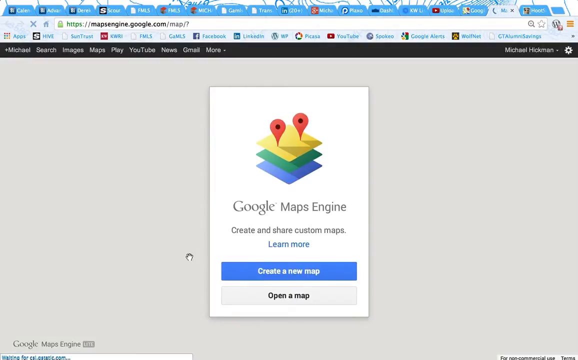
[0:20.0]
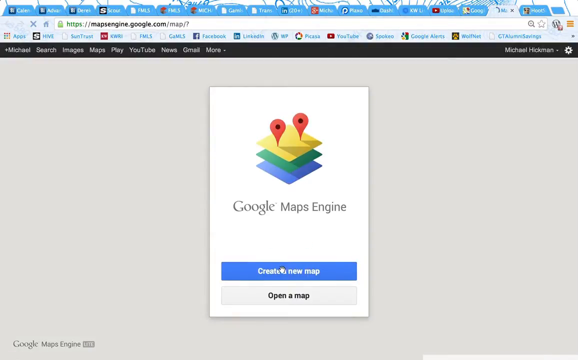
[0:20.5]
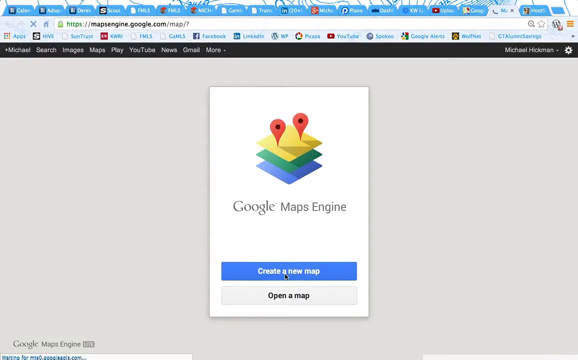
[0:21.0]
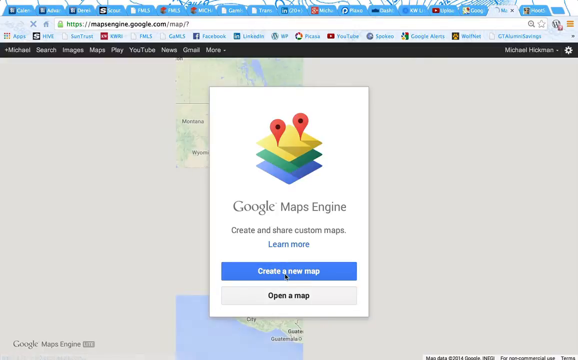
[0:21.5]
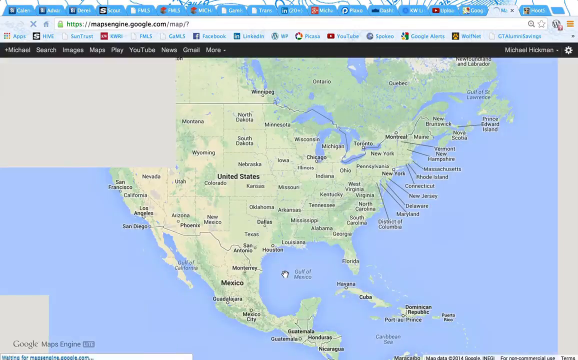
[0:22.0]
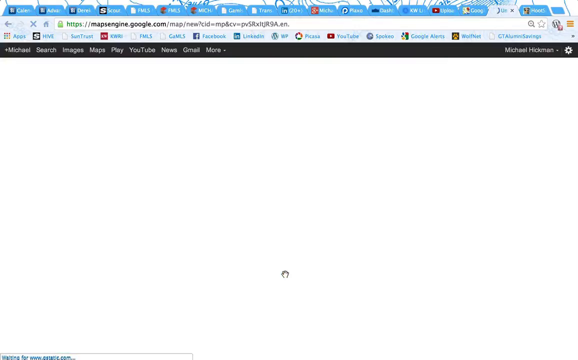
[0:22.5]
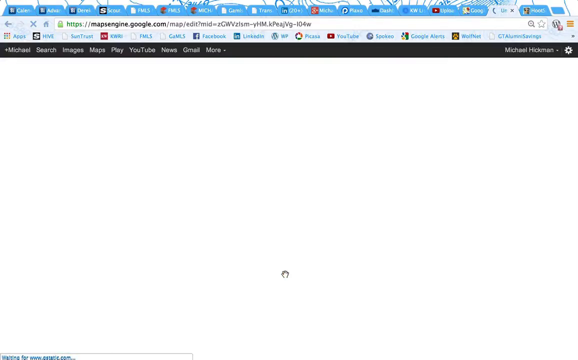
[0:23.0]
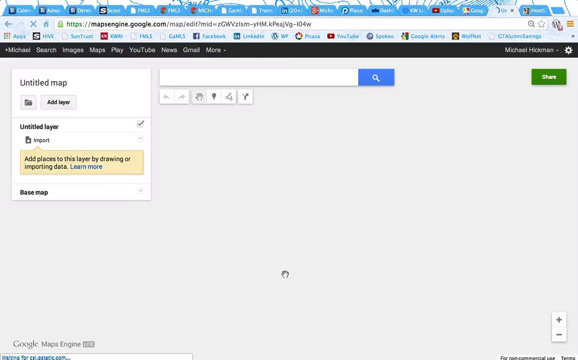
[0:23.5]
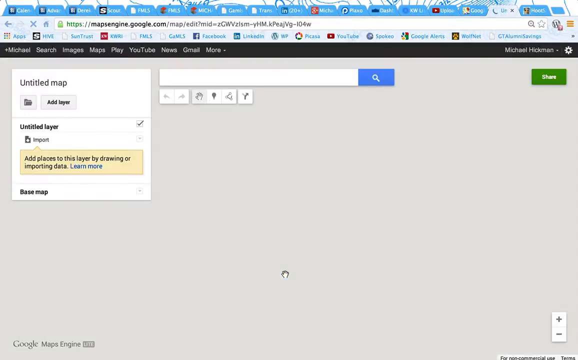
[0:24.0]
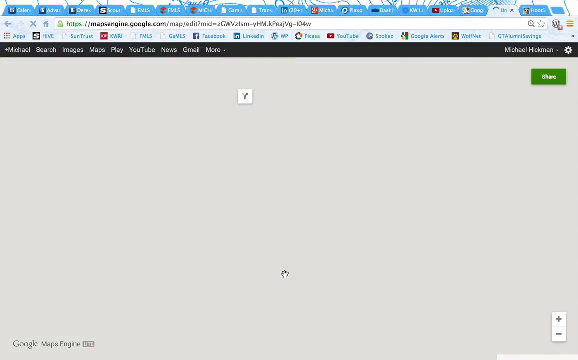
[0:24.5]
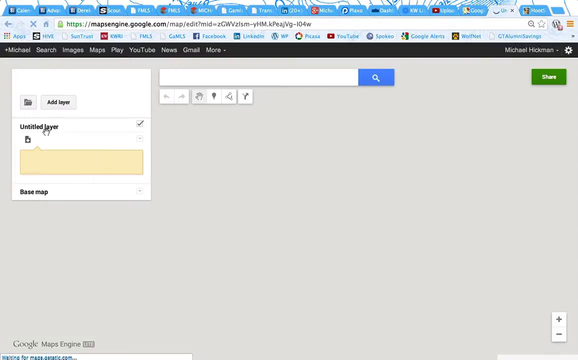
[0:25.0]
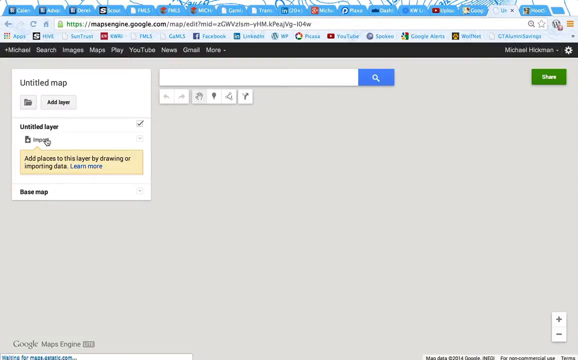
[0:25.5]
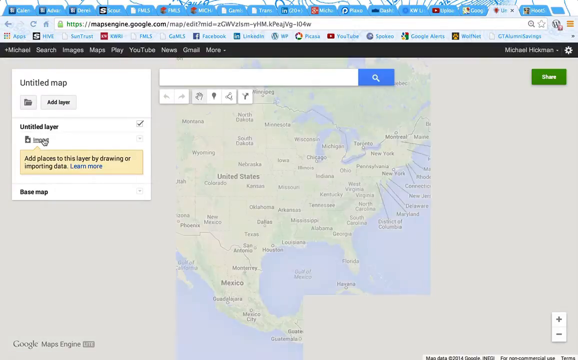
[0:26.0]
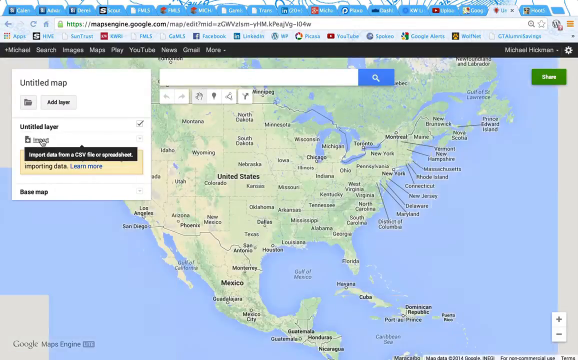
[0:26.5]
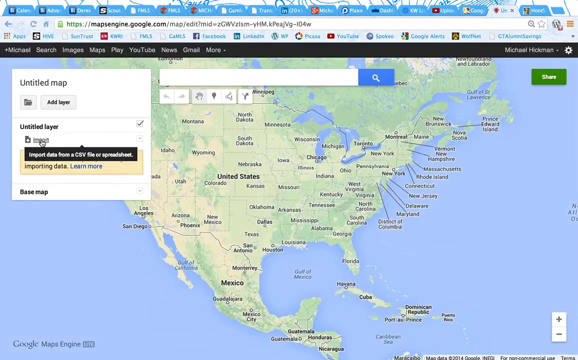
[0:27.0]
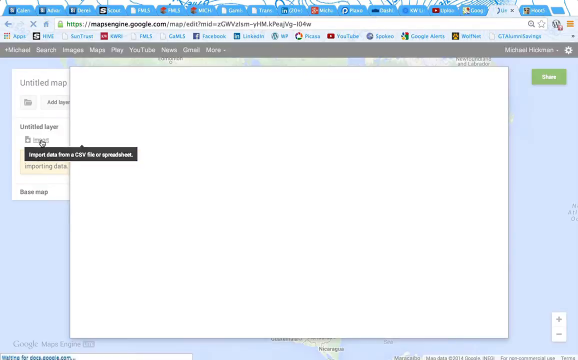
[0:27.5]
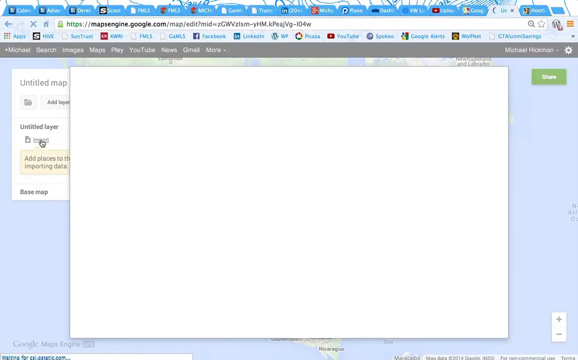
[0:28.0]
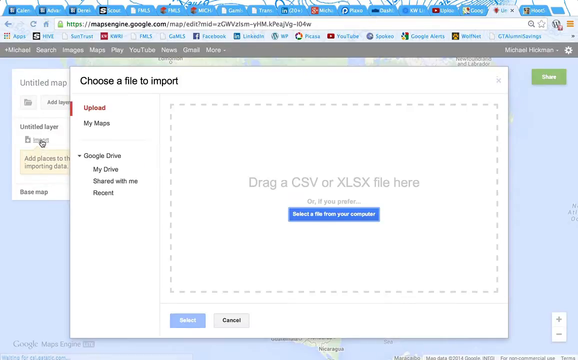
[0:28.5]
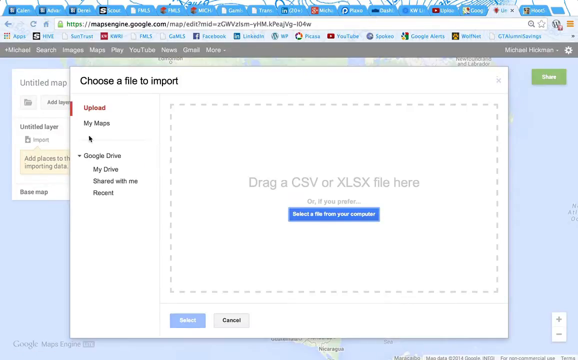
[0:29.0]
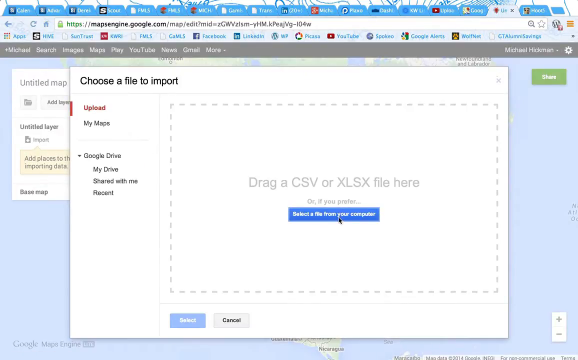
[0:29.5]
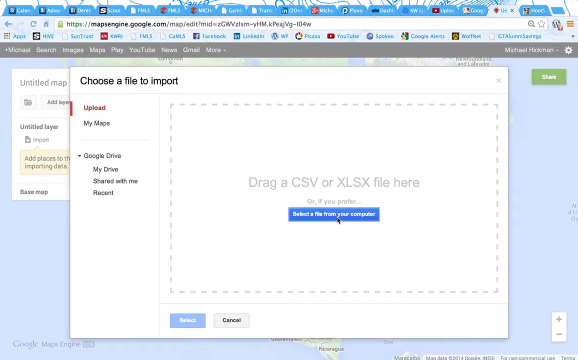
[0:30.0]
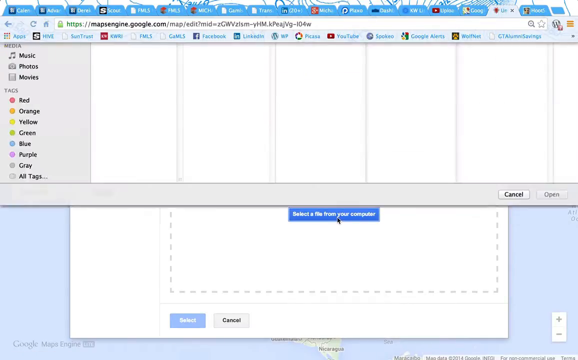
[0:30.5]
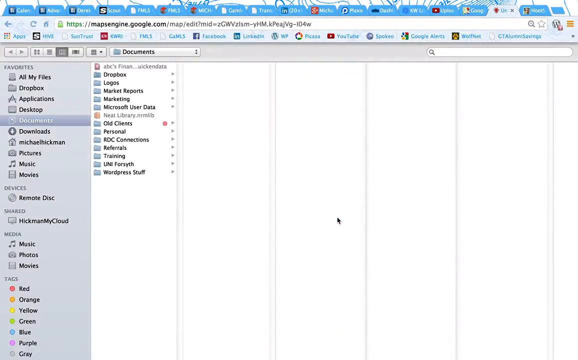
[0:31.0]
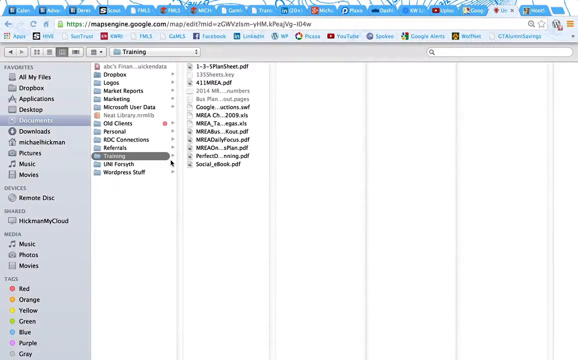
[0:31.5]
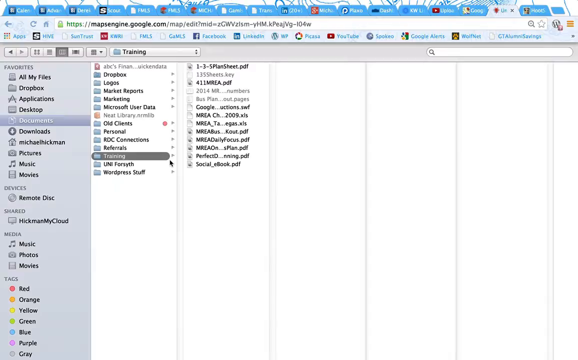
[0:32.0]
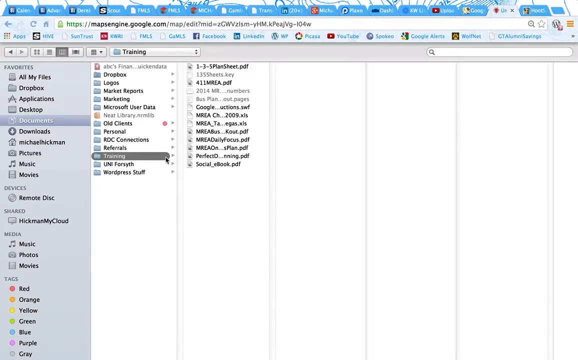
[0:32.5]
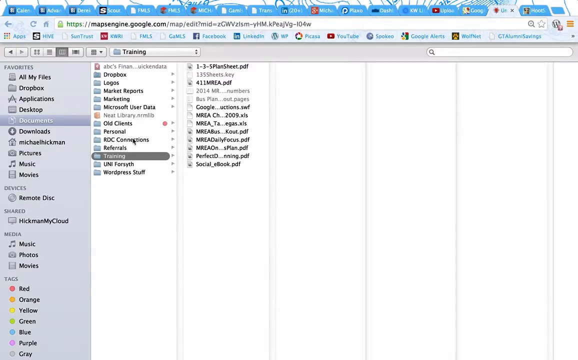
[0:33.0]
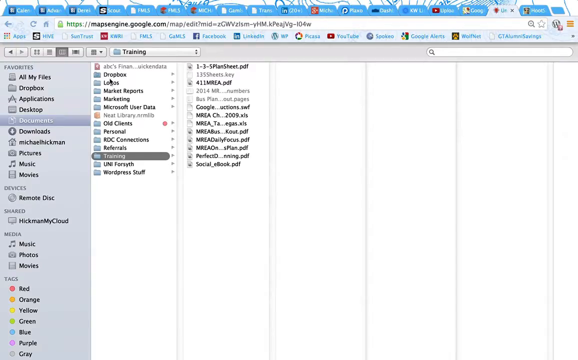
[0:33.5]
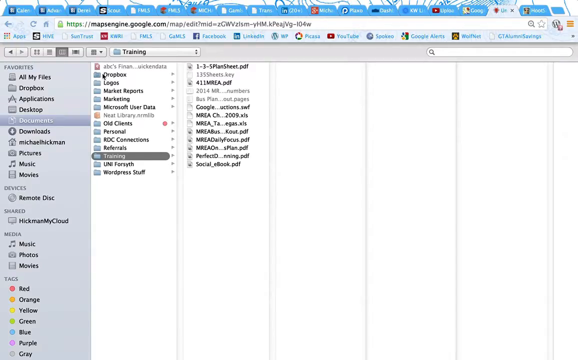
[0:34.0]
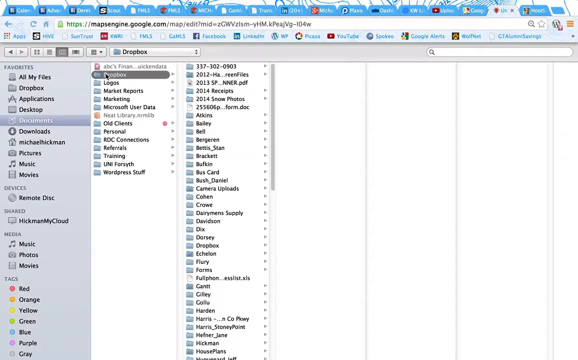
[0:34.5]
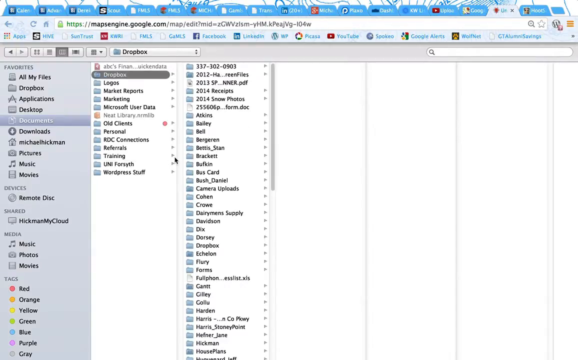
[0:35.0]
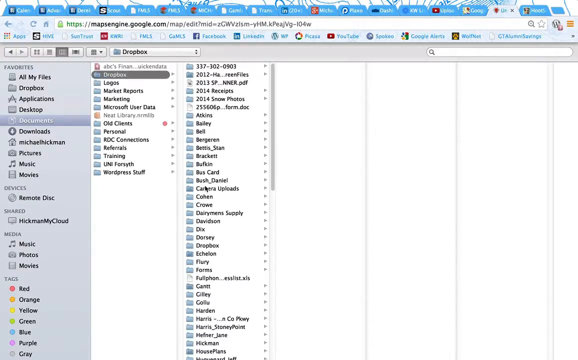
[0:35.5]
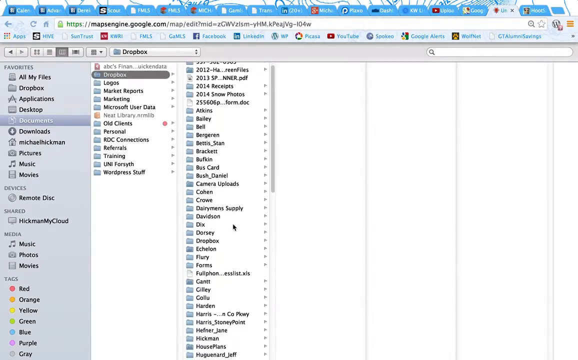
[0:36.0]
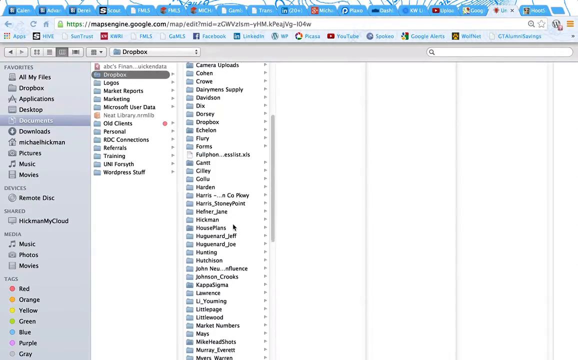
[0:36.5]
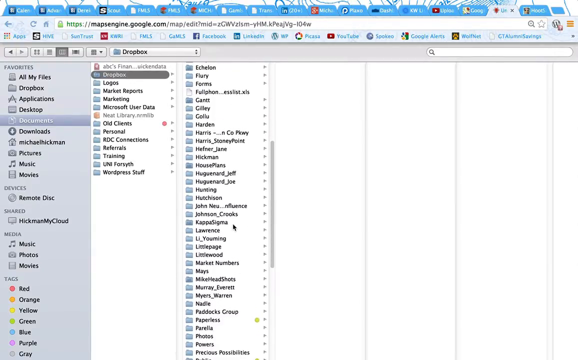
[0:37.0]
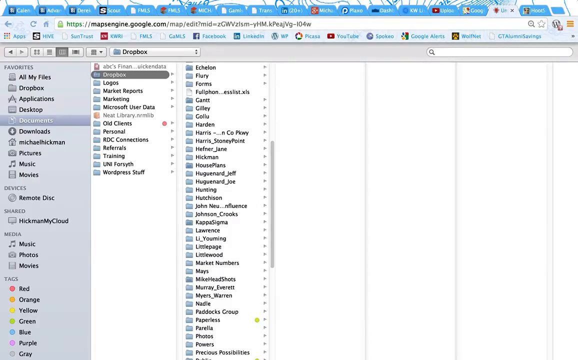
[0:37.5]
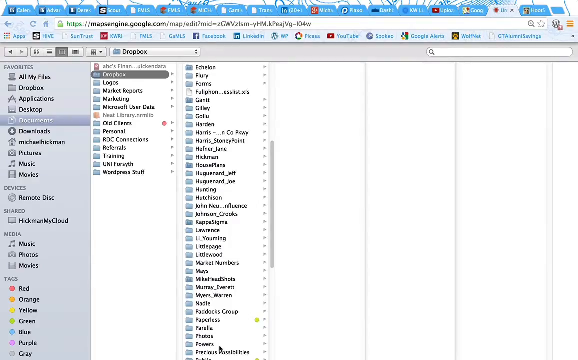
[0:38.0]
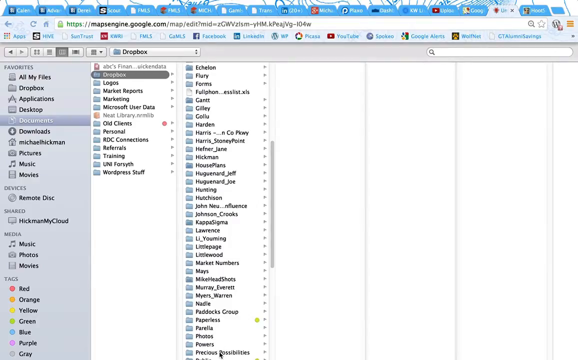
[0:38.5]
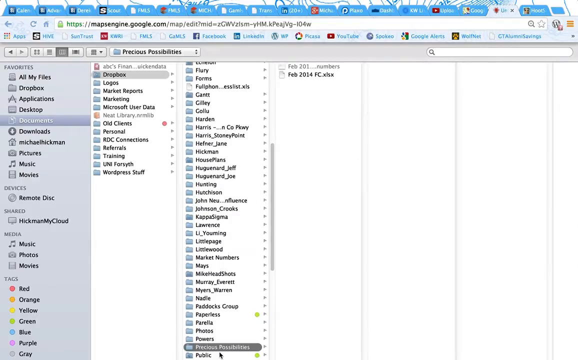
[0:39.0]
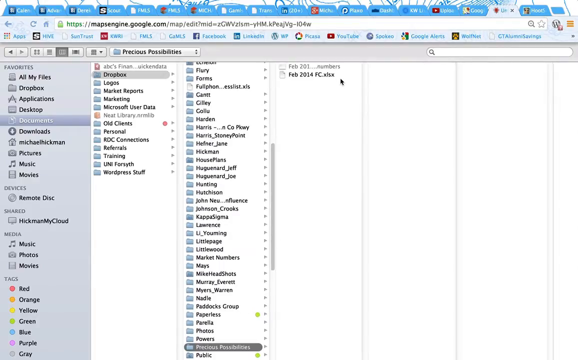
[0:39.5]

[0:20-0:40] A Google Maps web page shows a white window with an icon of four squares in a diagonal plane; the squares are yellow on top, green and blue, forming a 3D logo with two red map location pins on it. Below the logo the text reads "Google Map Engine. Create and share custom maps." There are two buttons: one says "create a new map" and the option below it says "open a new map." A map begins to open, with a square window of entry boxes on its left side. The mouse clicks an option that opens a template, and the screen changes to show a selection of options for building the template. As the mouse selects different options, additional options pop up for each. The mouse scrolls down looking for an option, then clicks one, and the screen changes.